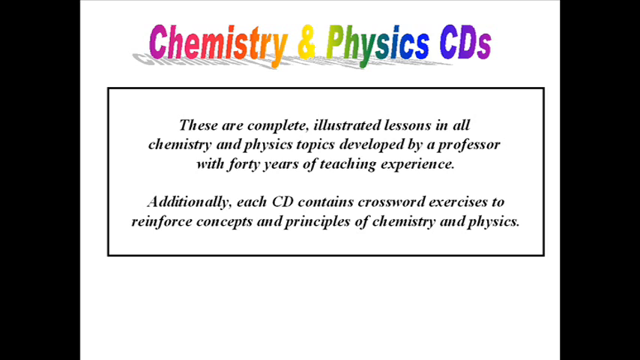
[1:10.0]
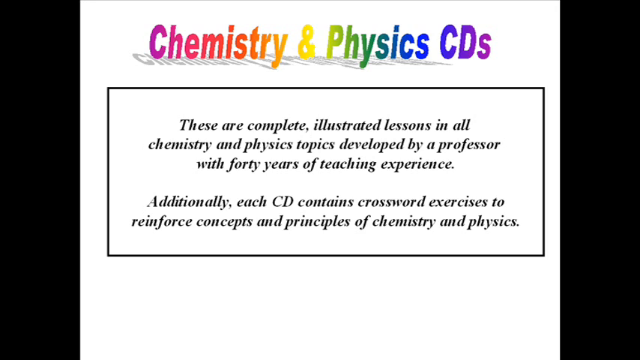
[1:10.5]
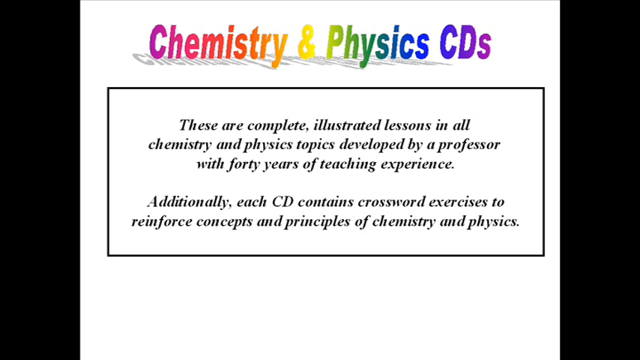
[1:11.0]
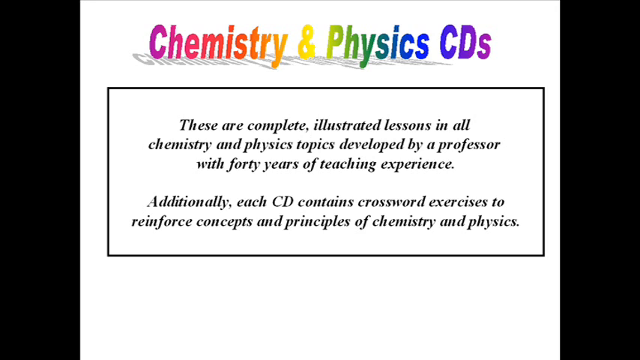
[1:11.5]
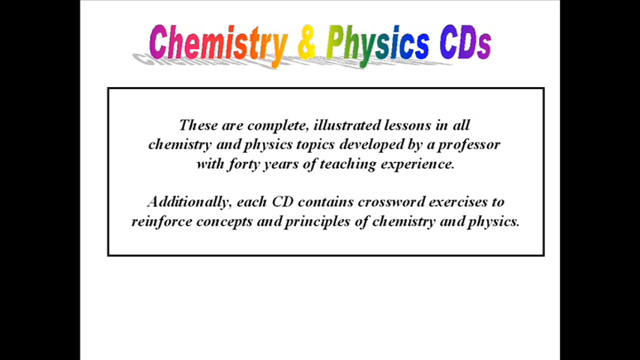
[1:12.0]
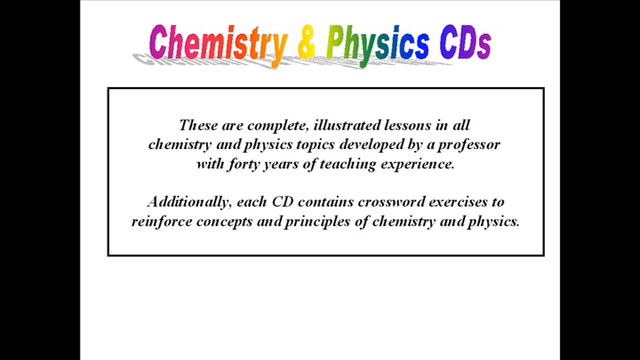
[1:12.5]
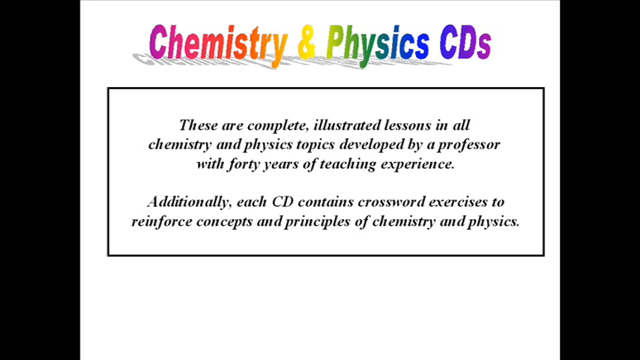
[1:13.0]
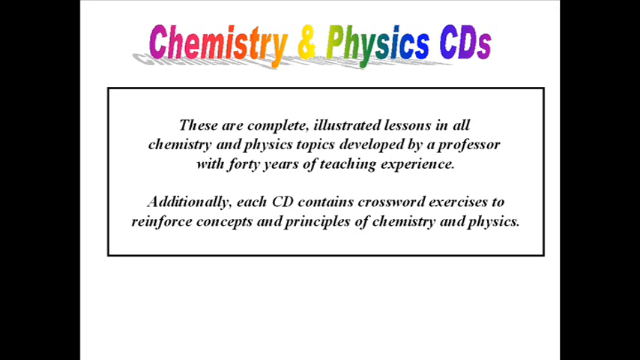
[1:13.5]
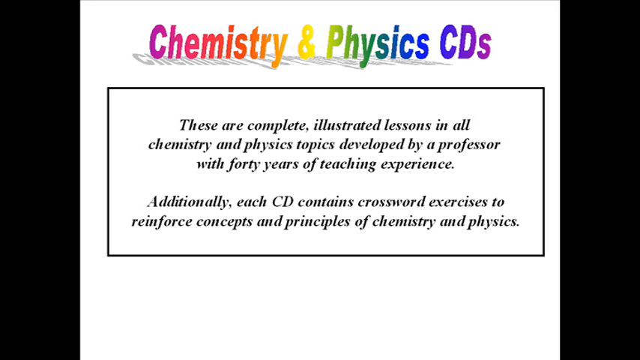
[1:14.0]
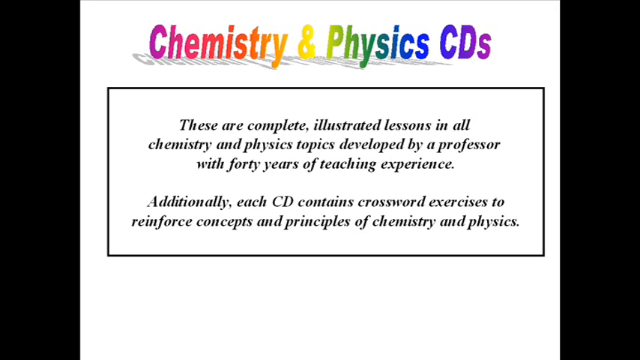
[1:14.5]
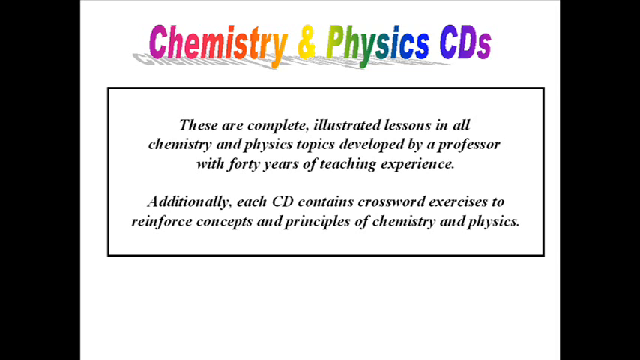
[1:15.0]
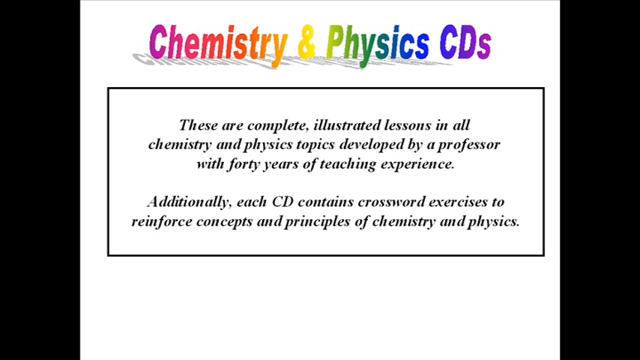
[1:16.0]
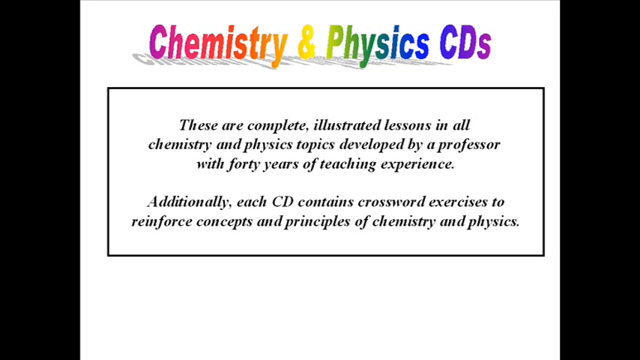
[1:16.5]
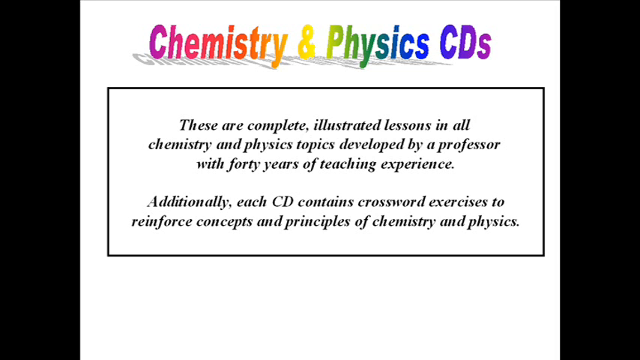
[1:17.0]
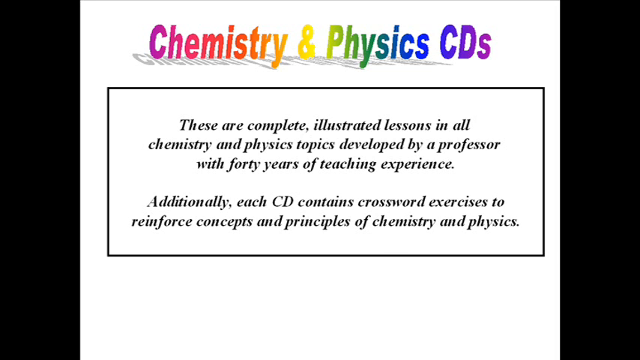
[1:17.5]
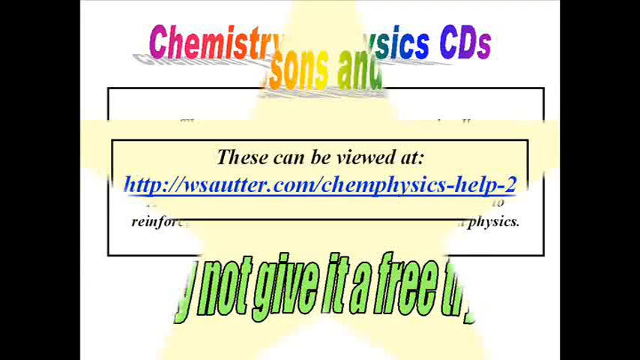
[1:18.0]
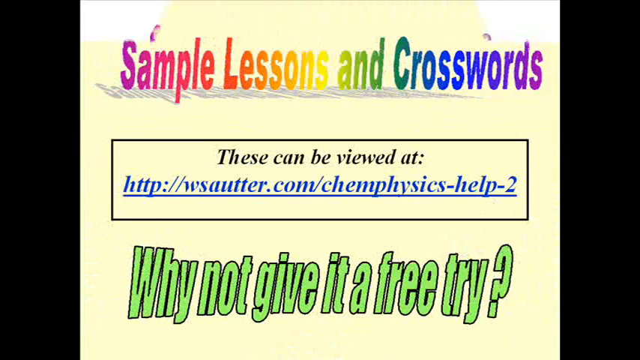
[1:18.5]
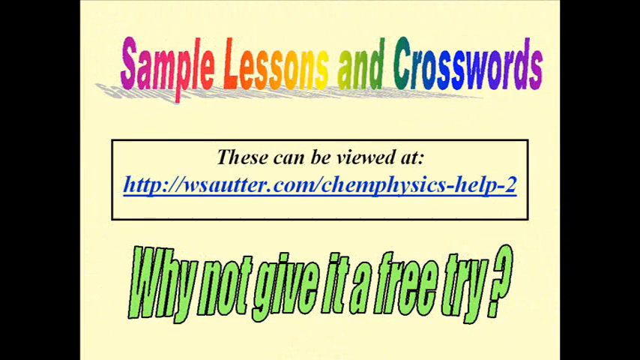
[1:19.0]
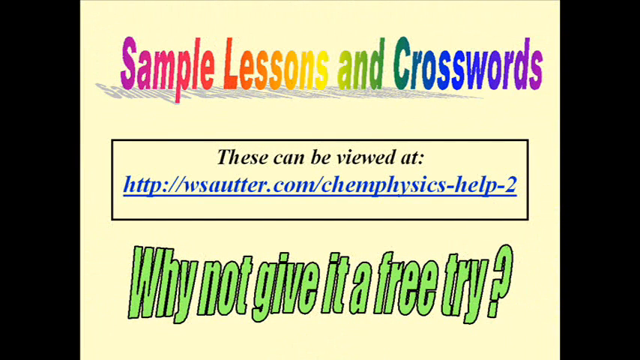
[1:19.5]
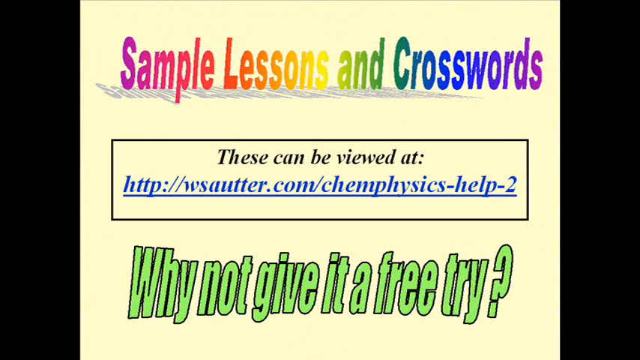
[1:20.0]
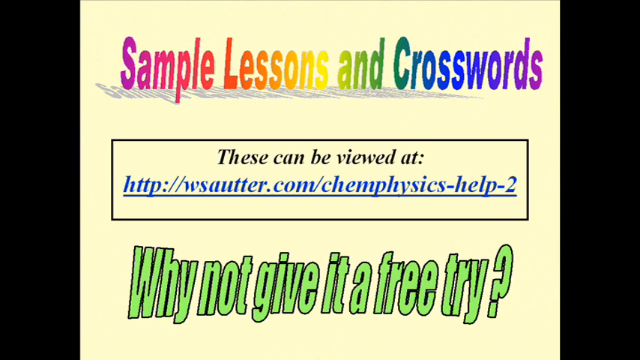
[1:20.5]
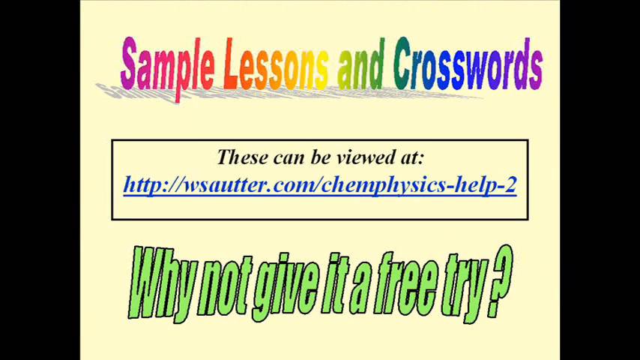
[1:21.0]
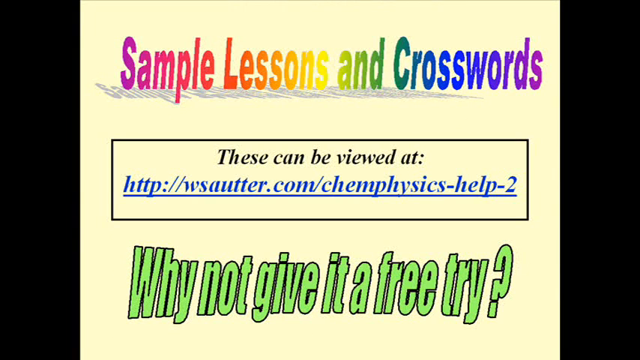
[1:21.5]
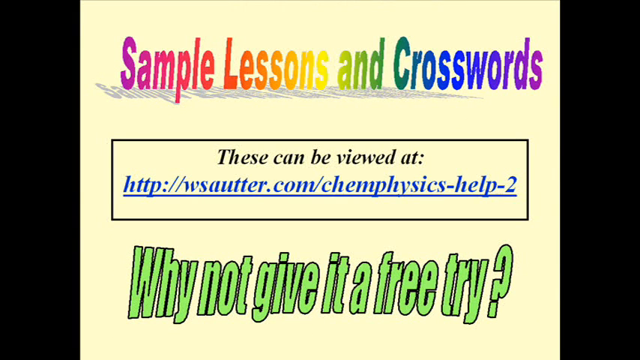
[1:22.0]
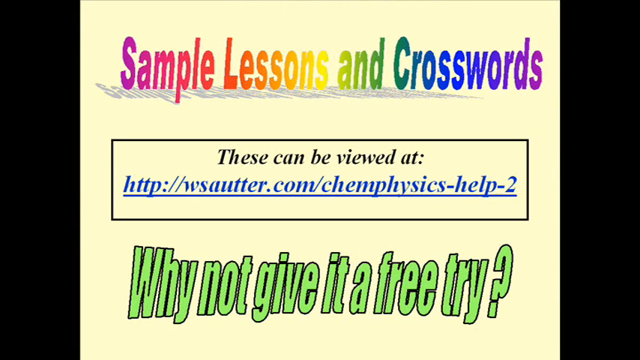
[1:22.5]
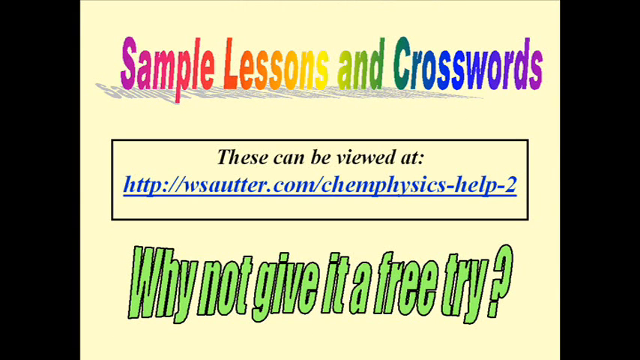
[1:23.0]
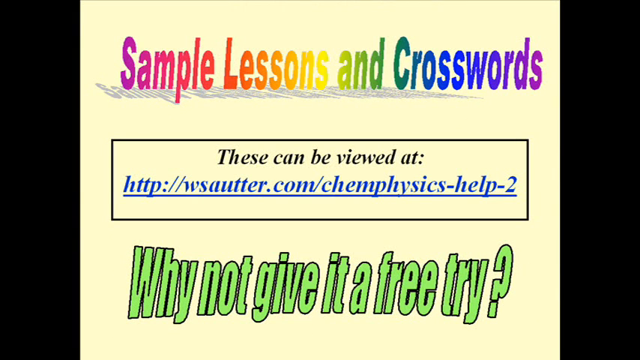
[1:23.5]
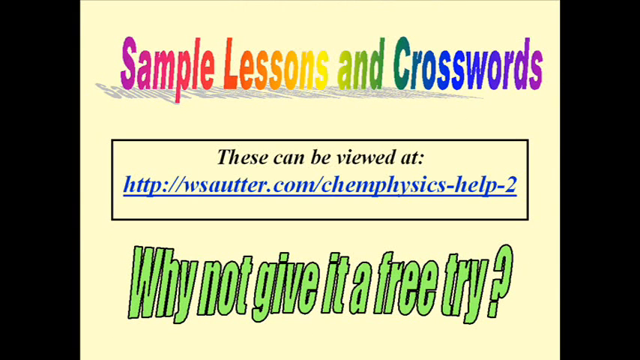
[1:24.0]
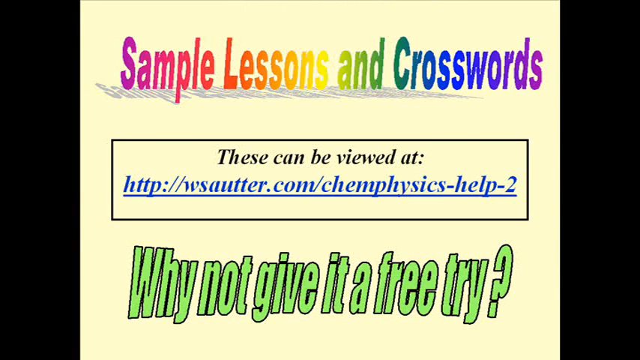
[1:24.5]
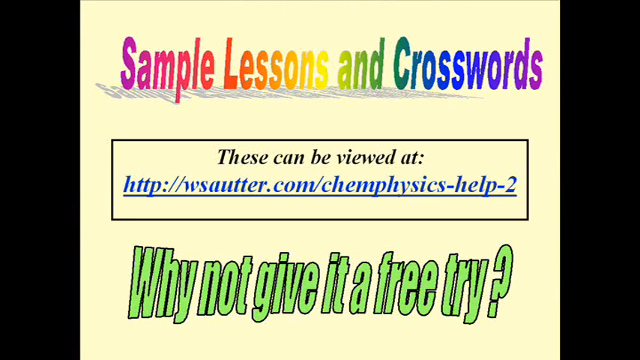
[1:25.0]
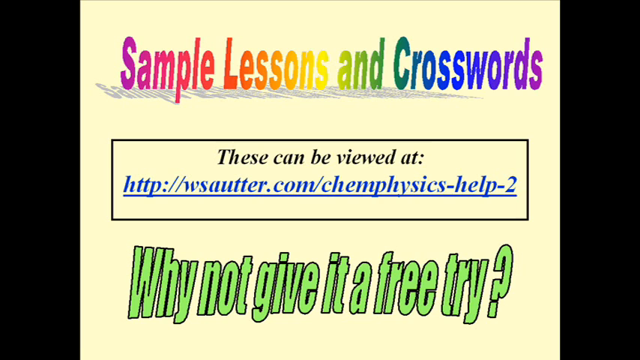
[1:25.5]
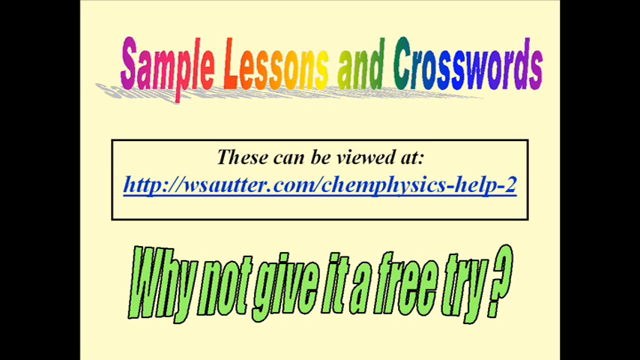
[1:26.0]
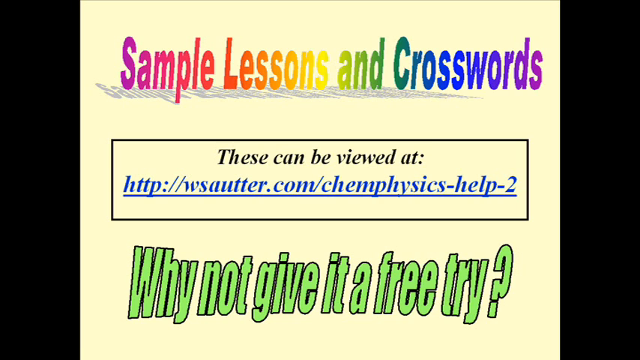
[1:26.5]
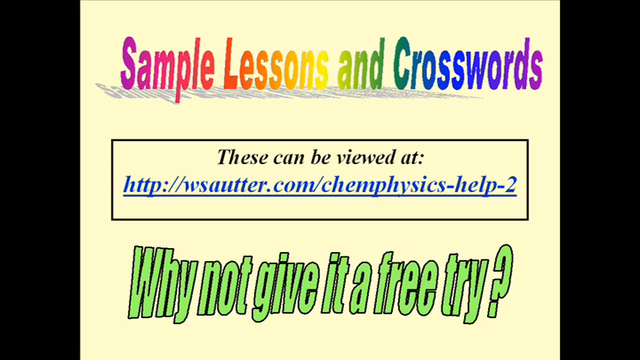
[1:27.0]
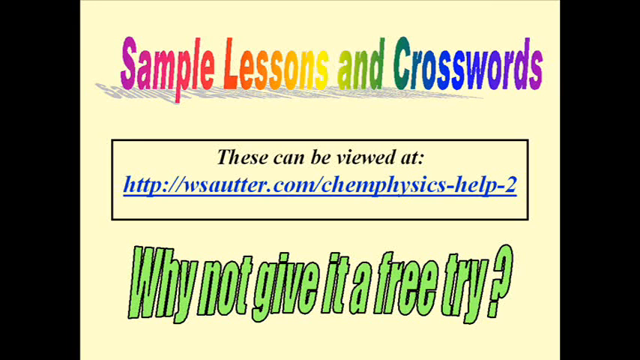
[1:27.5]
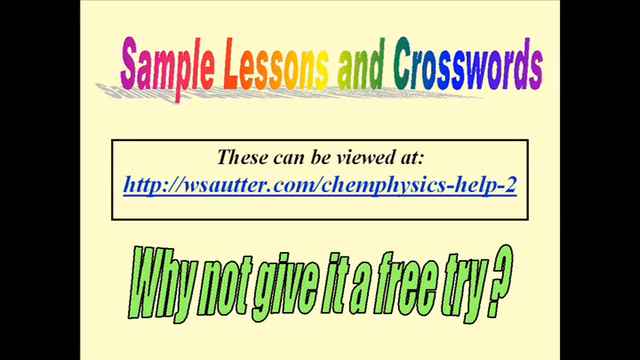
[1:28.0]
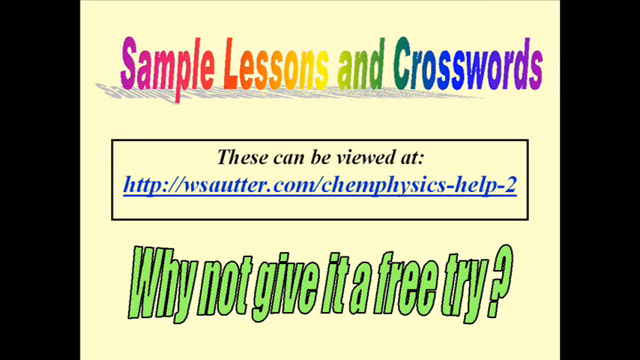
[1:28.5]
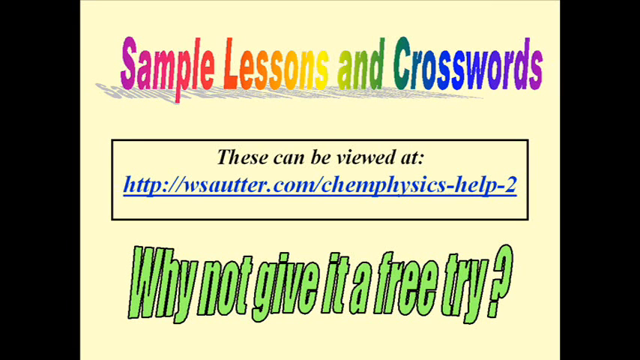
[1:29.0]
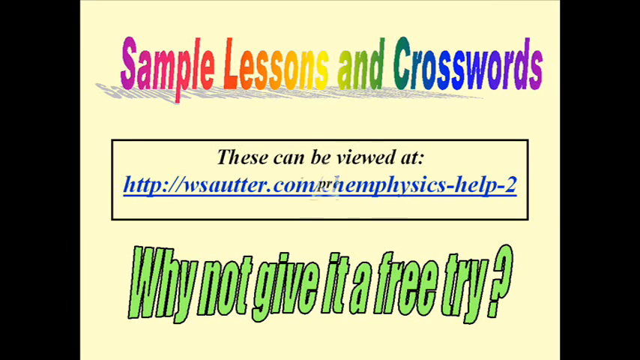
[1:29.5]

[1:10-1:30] The text box remains in the middle with the title at the top of the screen. The star transition then happens again in the center and opens up to a new image with a yellowy beige background. In the center of the screen, a text box reads "this can be viewed at" followed by a website. At the top of the screen, the text "sample lessons and crosswords" appears in a rainbow gradient. At the bottom of the screen, the text "why not give it a free try" appears in a green font with a small black outline around the letters. At the very end, the star transition starts to come in toward the next image and is halfway through as the shot ends.